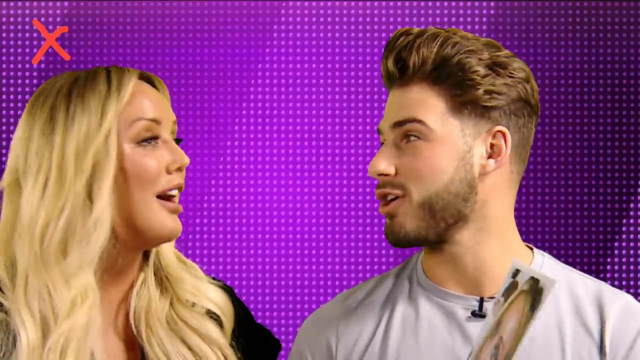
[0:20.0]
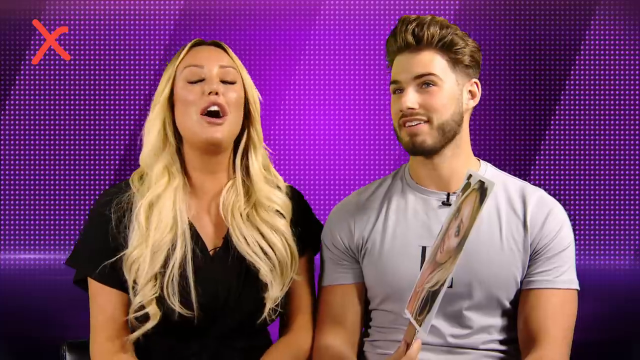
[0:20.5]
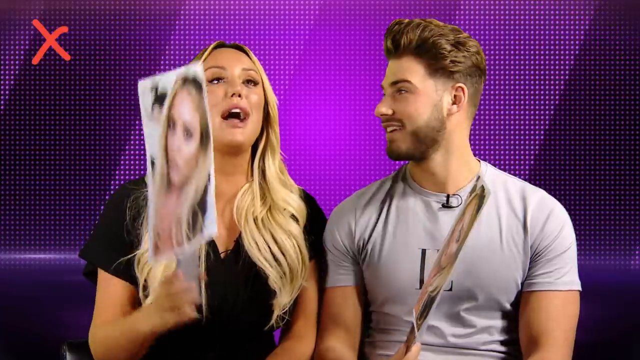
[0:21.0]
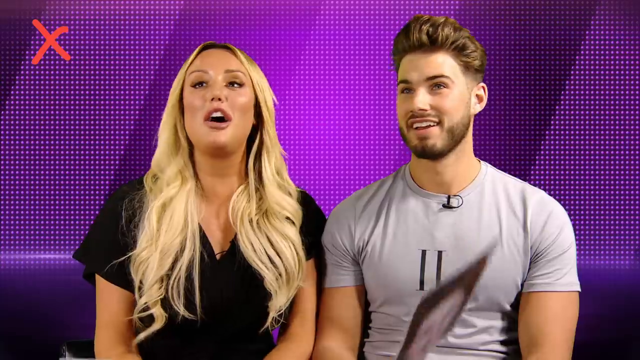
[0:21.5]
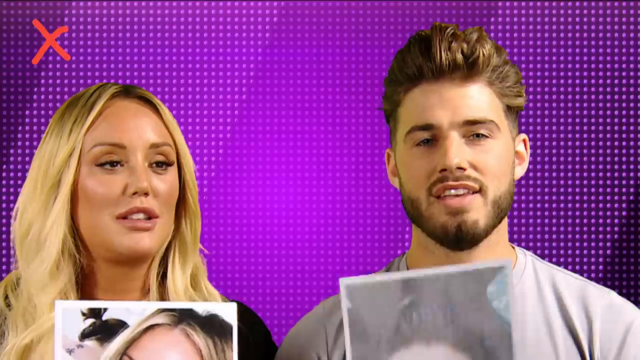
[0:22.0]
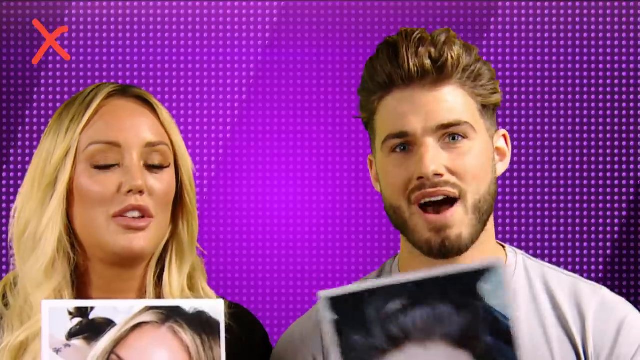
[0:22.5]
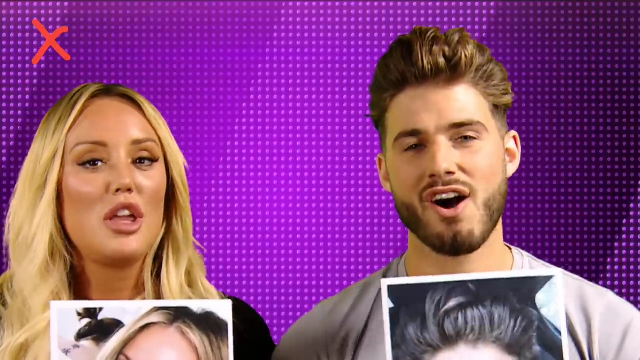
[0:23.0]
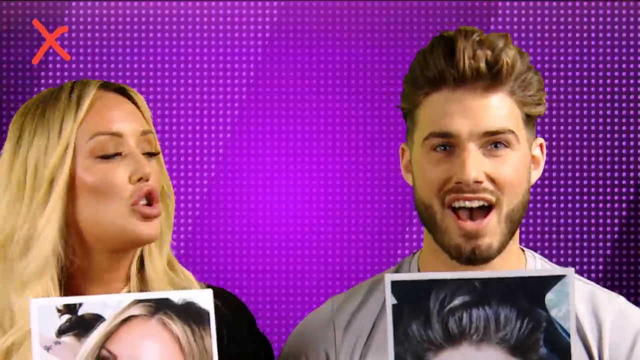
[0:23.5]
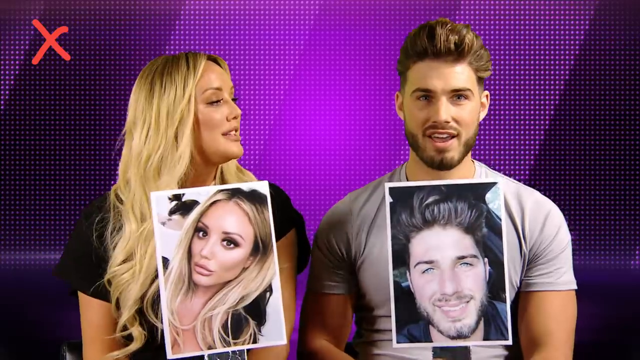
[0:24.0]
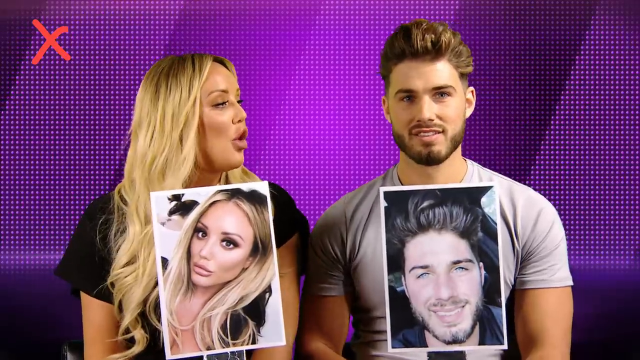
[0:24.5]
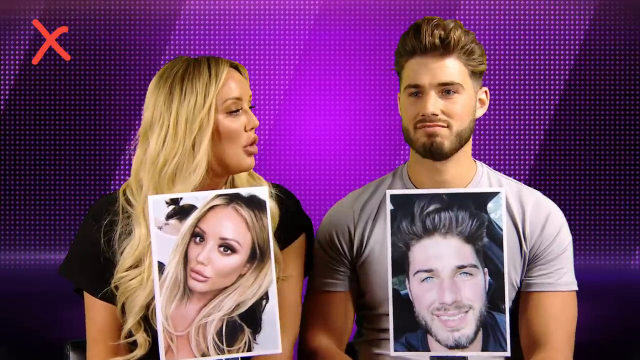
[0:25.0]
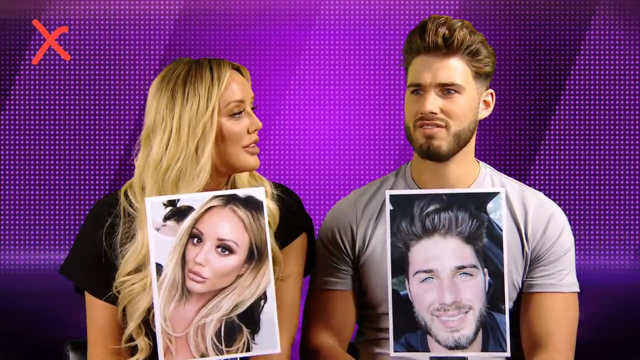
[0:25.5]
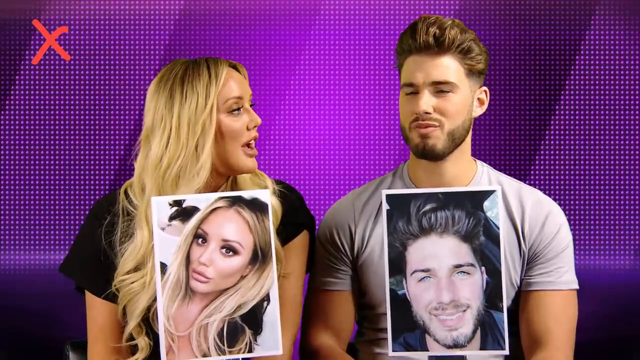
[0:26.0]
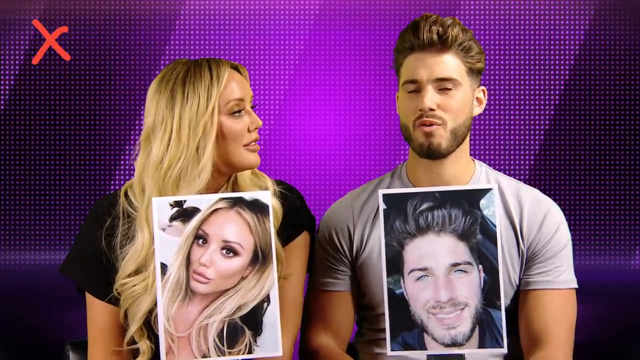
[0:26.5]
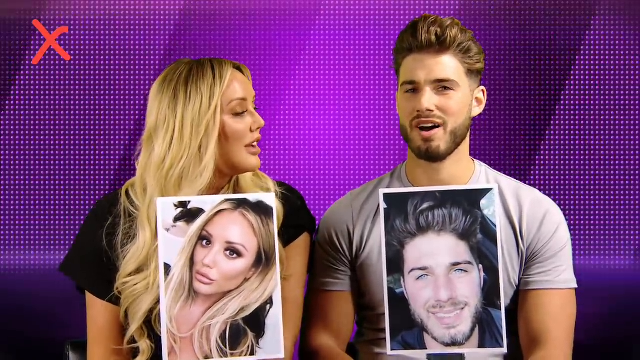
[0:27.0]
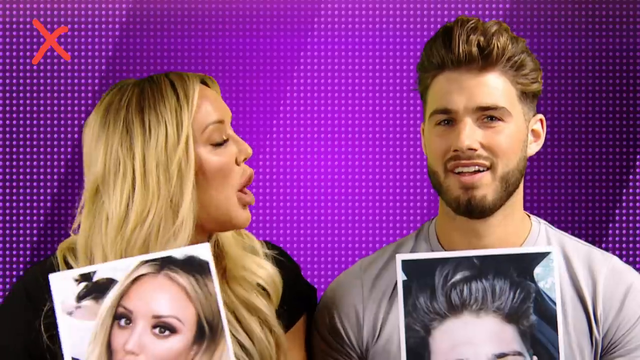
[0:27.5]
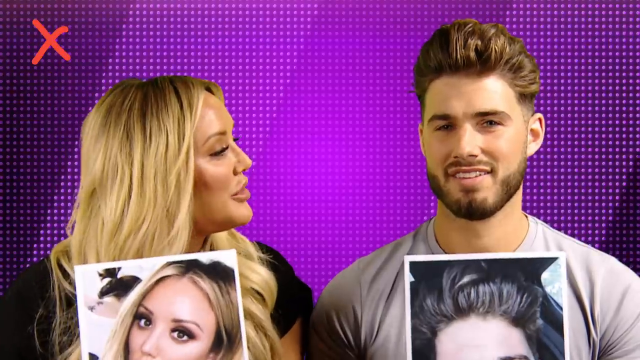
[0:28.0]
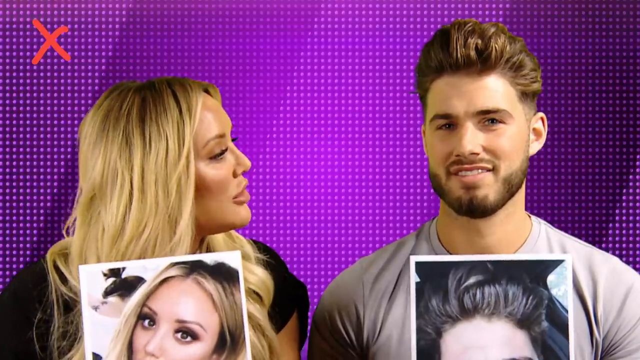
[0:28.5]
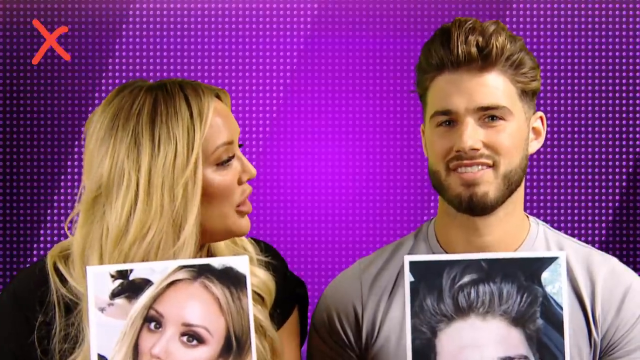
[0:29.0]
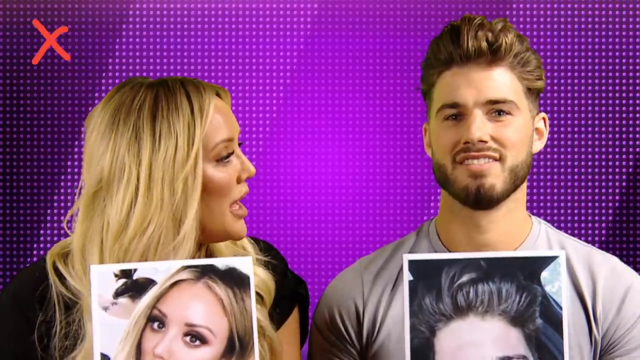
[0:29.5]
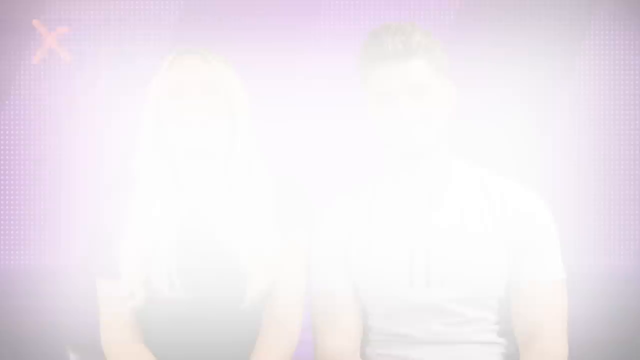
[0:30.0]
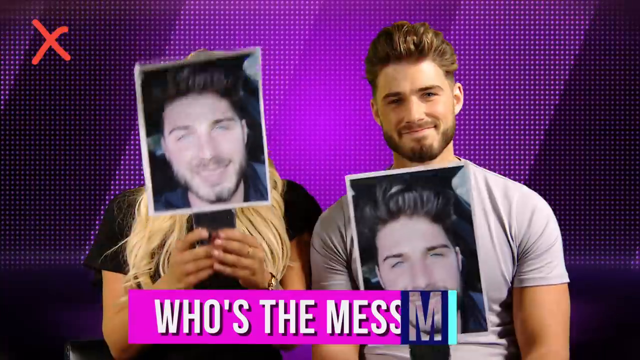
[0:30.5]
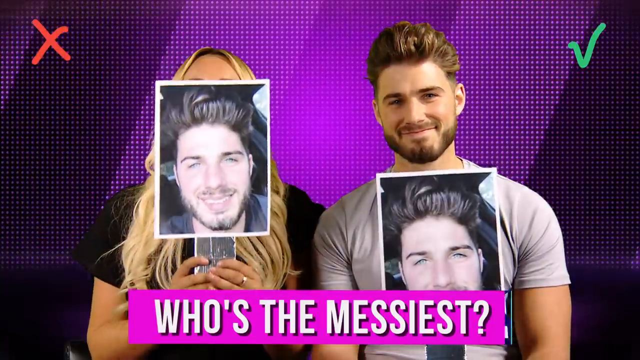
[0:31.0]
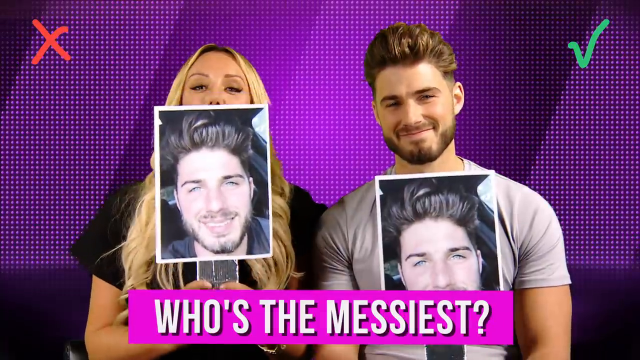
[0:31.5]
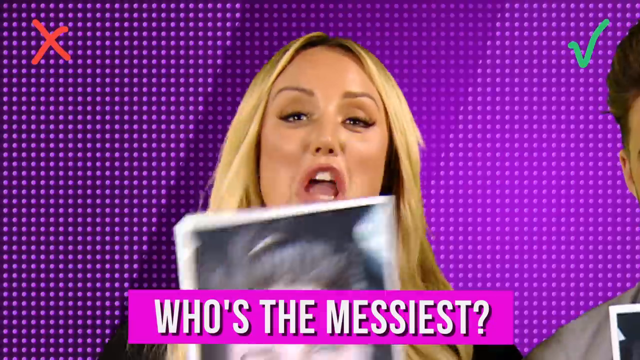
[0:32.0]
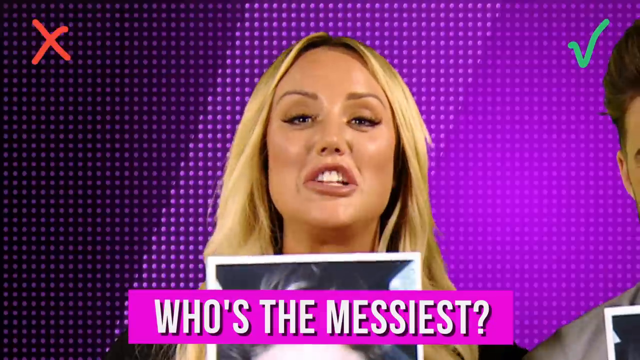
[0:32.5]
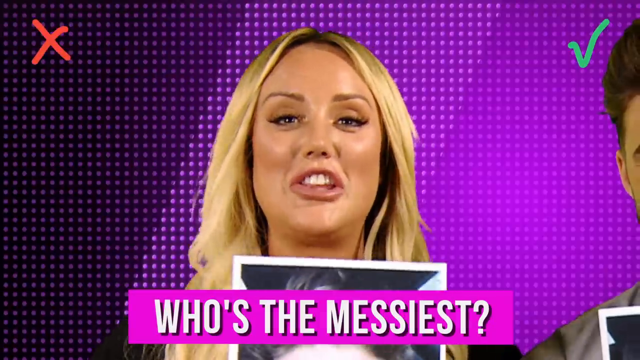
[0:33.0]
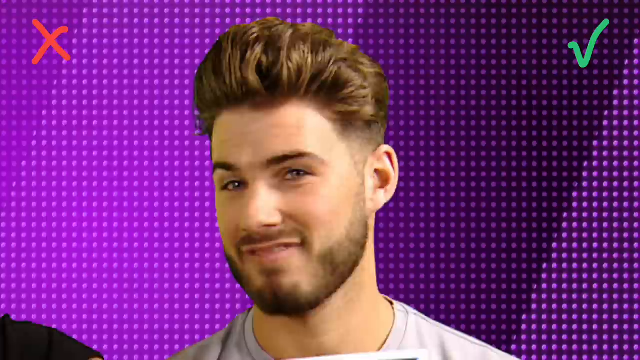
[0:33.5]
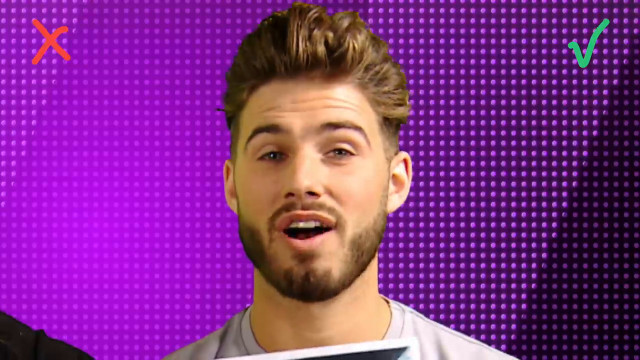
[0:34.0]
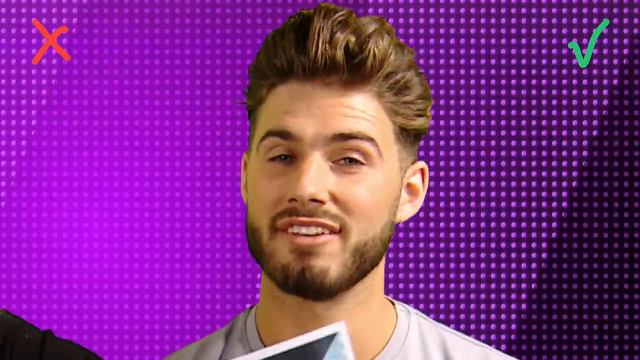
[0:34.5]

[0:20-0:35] The couple discuss which of them is the messiest, and both vote for Josh. They appear to banter back and forth about the reasoning behind him being the messiest, and they seem to agree on it; she appears to feel vindicated. The video then cuts to show that each of them holds a picture on a stick to hold up when answering the questions; apparently one side shows a picture of her and the other side a picture of him, so they can switch their answers as they go.